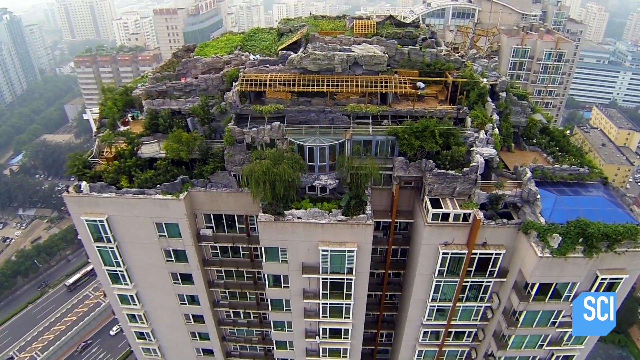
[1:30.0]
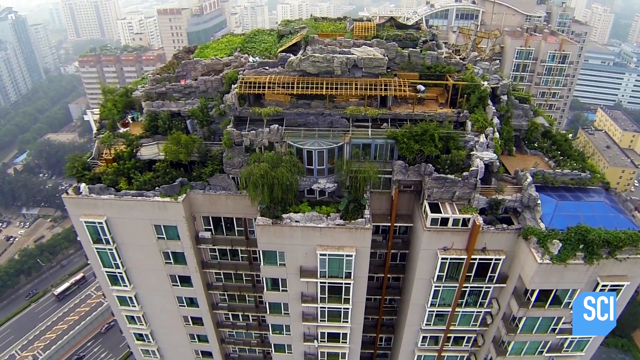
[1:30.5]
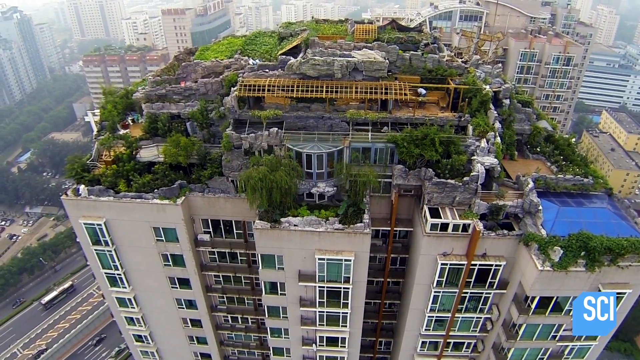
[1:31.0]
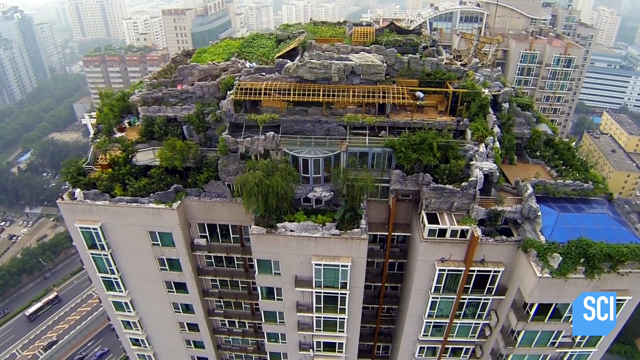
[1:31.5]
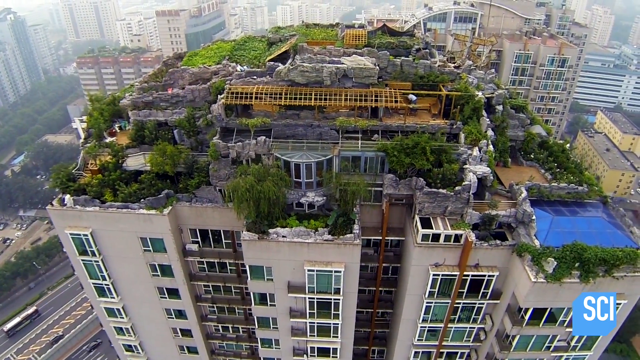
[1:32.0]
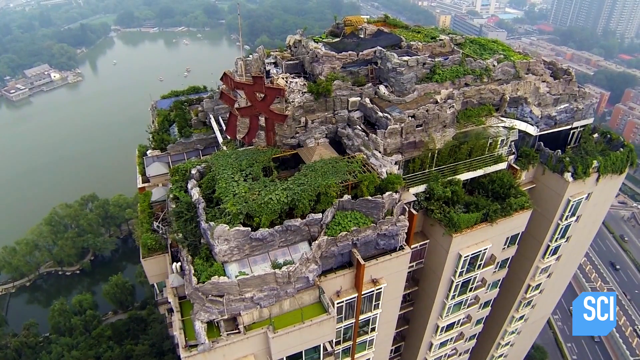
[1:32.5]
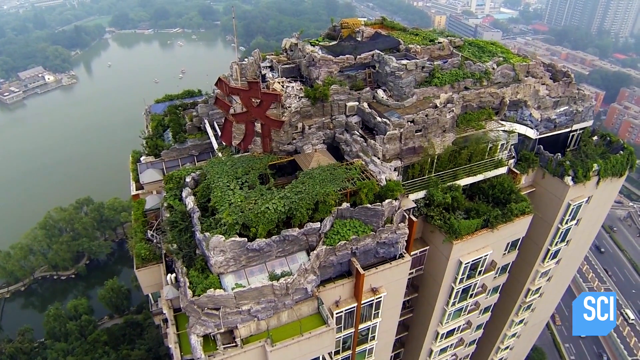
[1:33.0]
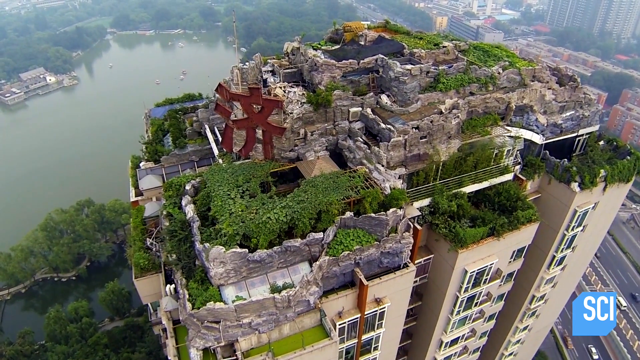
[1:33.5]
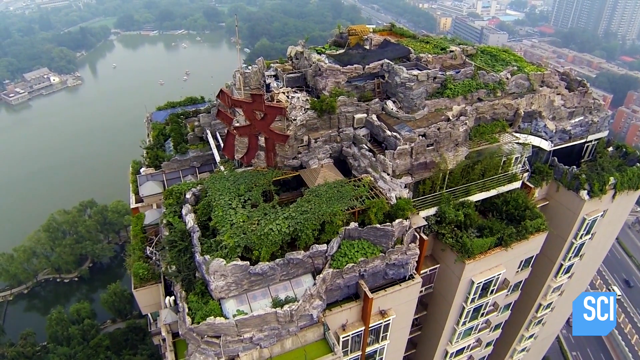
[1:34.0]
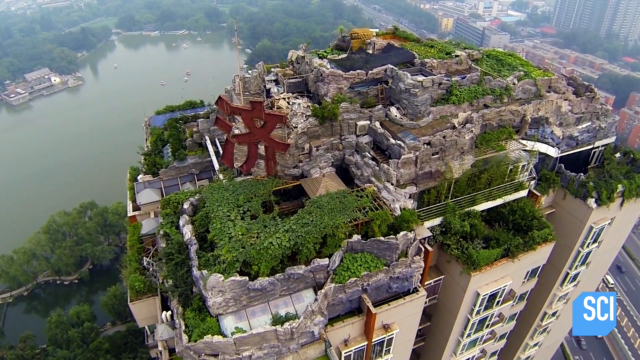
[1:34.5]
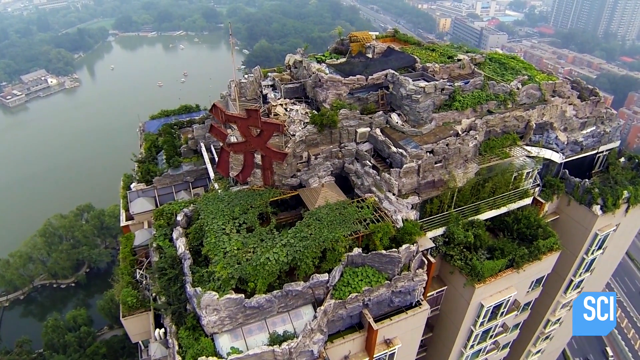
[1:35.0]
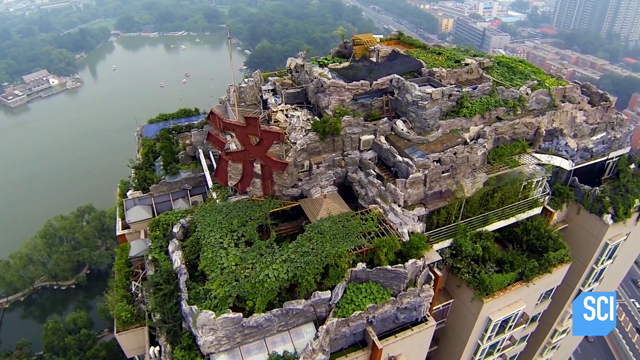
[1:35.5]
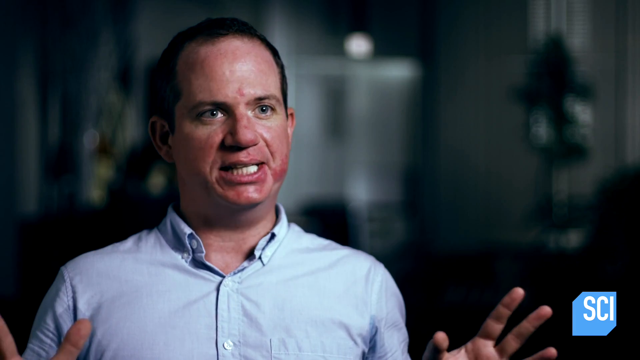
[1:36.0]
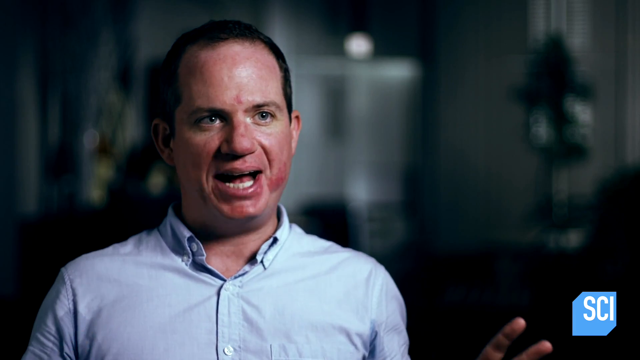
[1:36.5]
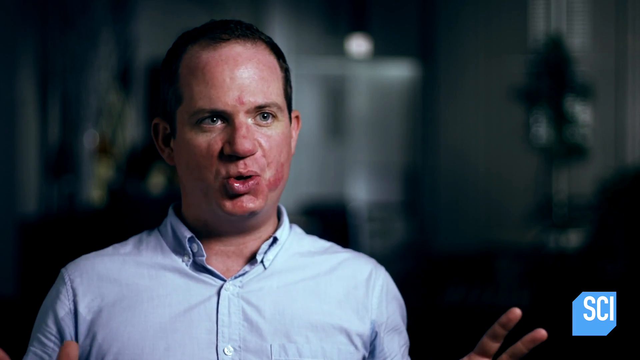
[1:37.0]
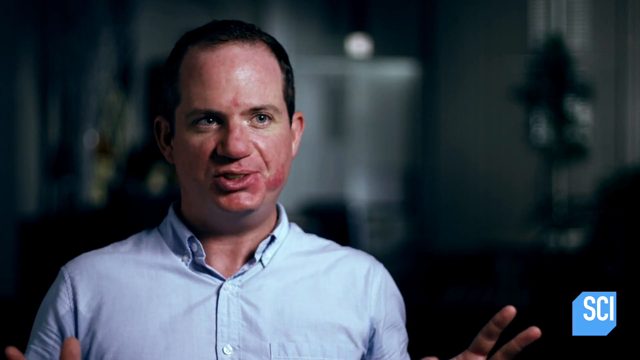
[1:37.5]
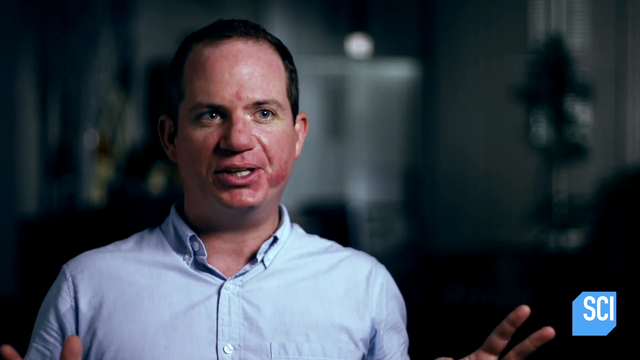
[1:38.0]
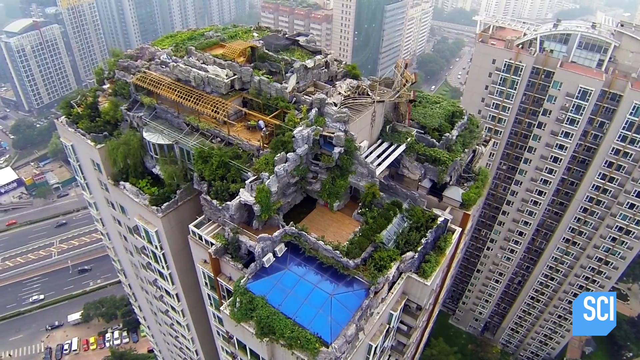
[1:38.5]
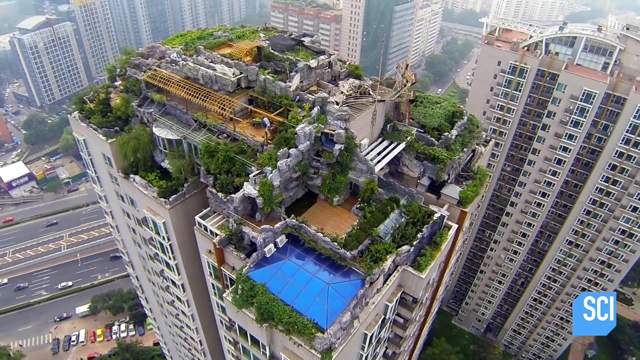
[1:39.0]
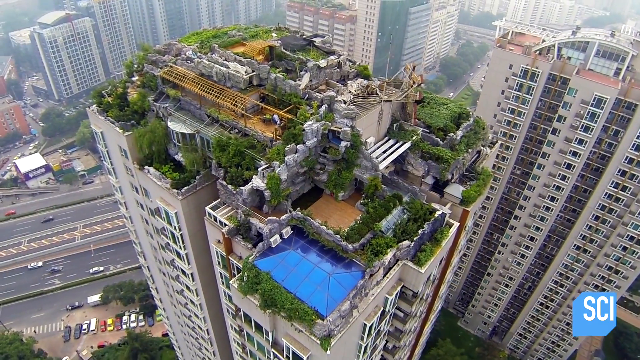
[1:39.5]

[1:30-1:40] Through the drone, the top of the apartment complex is seen, with the drone circling above and coming in from several different angles. On it is a very tall metal statue in Chinese characters, a blue area that is possibly a swimming pool or just covered glass, lots of trees and shrubs, and some yellow railing work up near the top. The complex is multilayered and has a lot of rock in it resembling a mountain, plus something like a portico with a half-dome front like those at the front of many castles. The journalist Sheen Fletcher is seen talking, and the lake is visible in the background beyond the building.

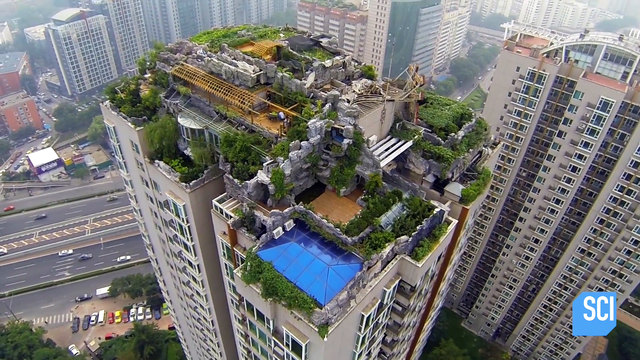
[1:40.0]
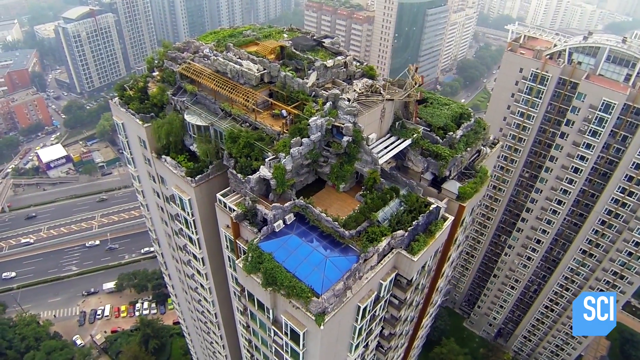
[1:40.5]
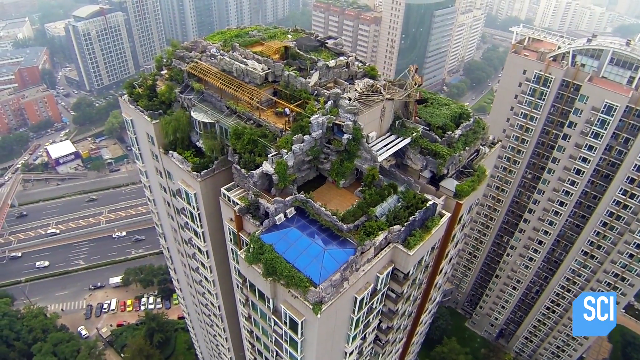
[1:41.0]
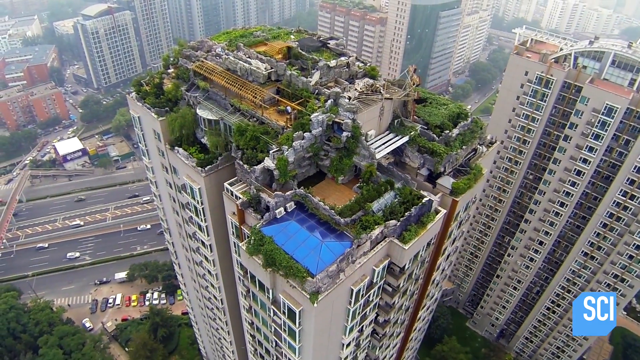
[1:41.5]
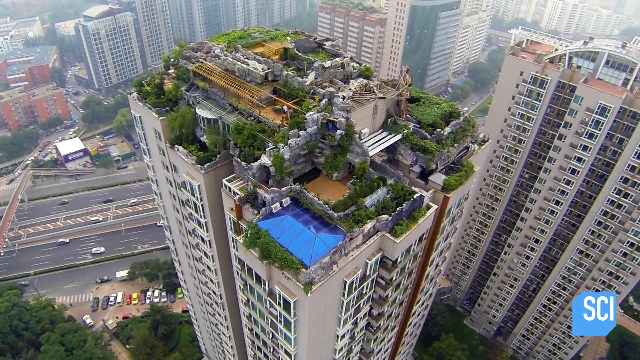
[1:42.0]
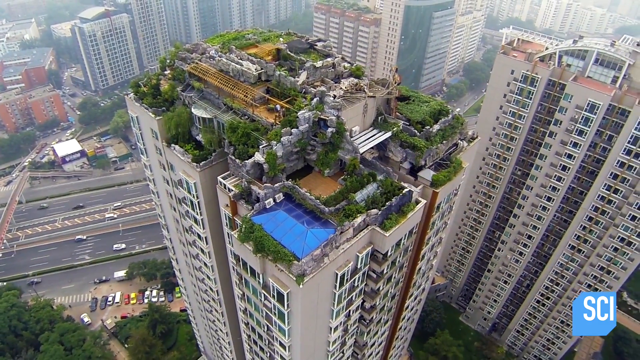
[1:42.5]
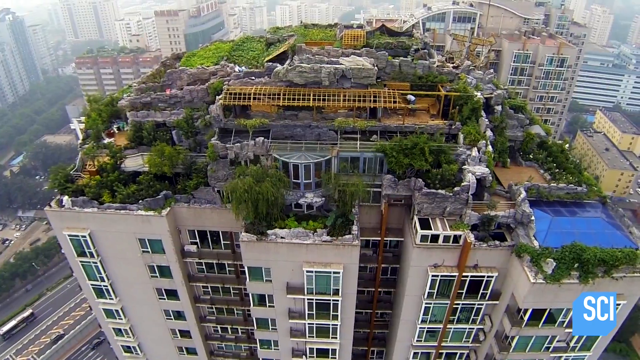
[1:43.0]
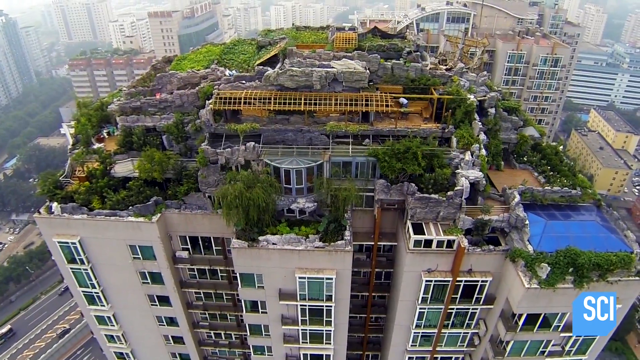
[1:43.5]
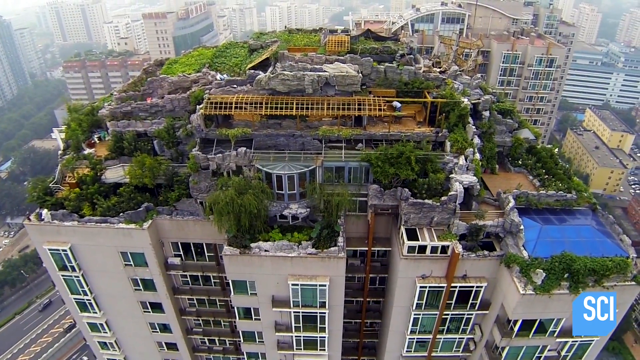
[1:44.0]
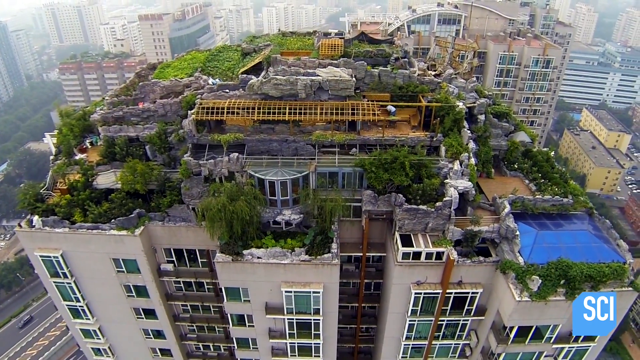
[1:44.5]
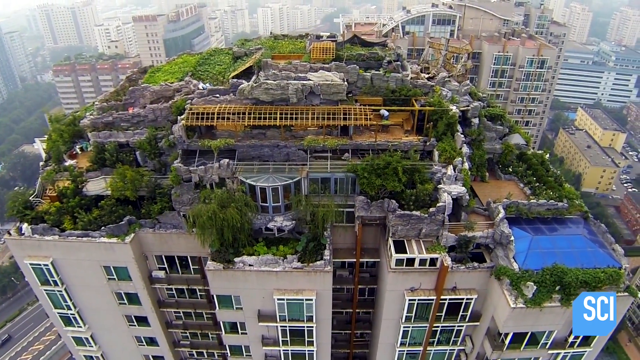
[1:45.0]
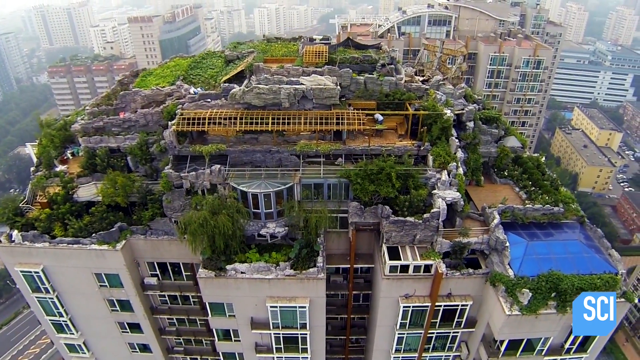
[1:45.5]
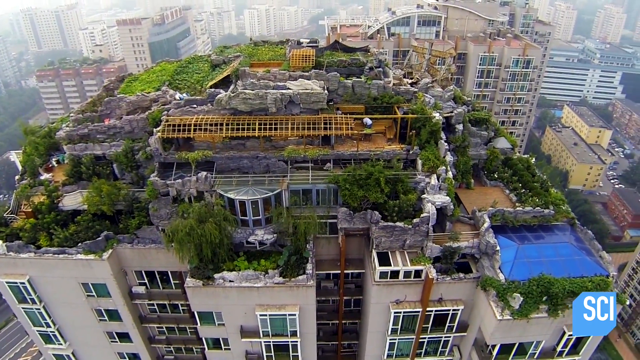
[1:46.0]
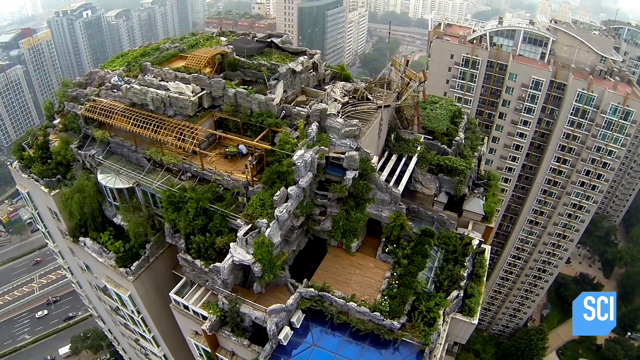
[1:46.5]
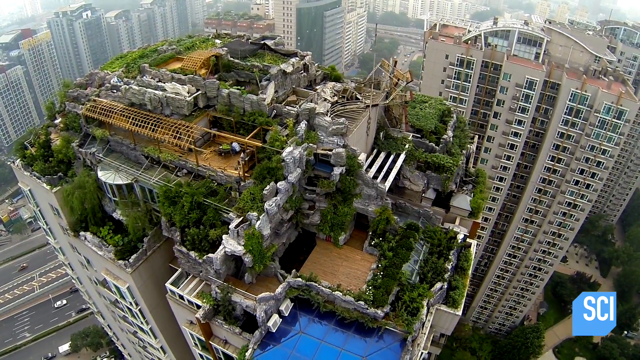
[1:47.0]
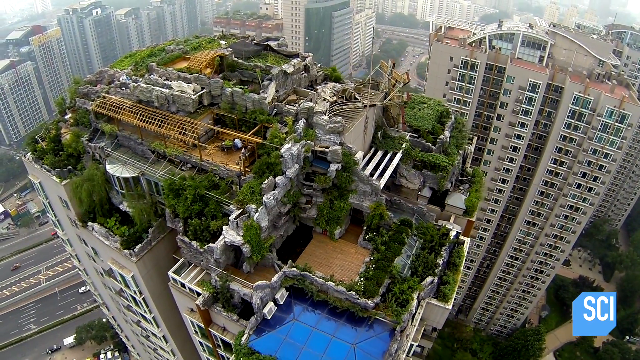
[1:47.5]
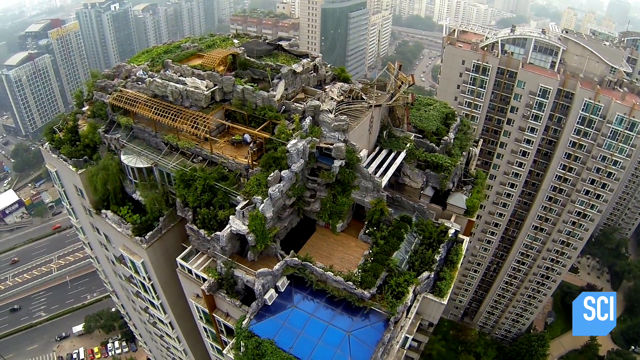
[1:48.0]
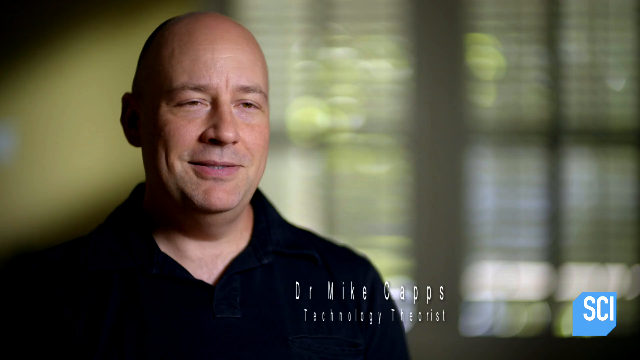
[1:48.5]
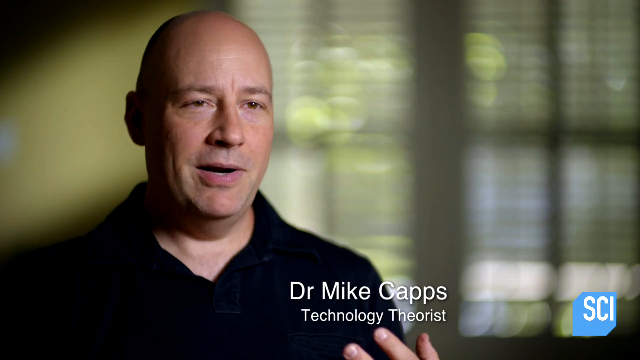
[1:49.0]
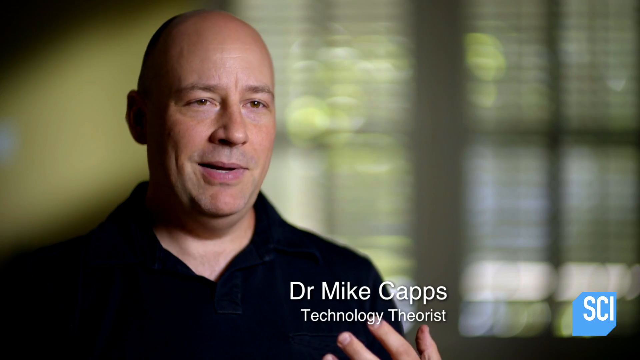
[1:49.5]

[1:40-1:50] The mountaintop retreat built on top of the apartment complex is viewed first from the drone, which is kind of backing away, high up. Mike Capps, a technology theorist, is talking. A blue roof covers something on one corner, and there is kind of a courtyard with lots of trees, lots of rocks and a solid fence. The structure looks like it covers at least three or four stories: there are several stories in the building itself, the round portico, and more above it.